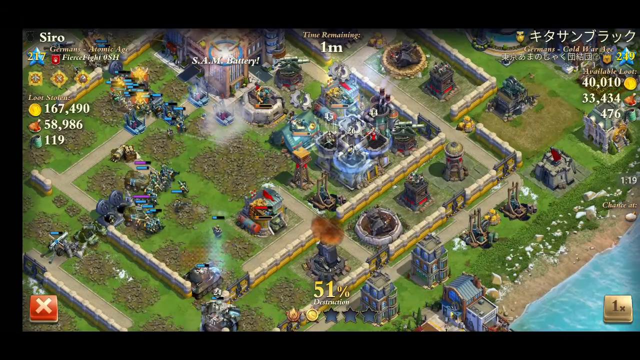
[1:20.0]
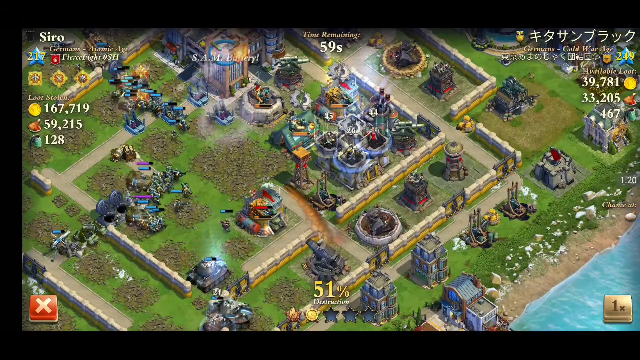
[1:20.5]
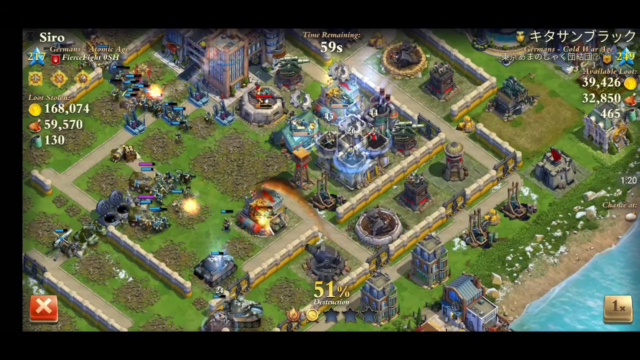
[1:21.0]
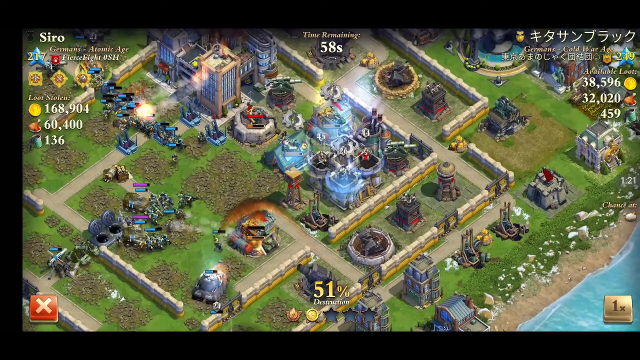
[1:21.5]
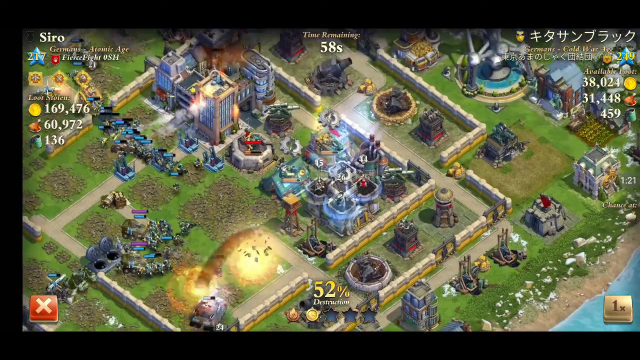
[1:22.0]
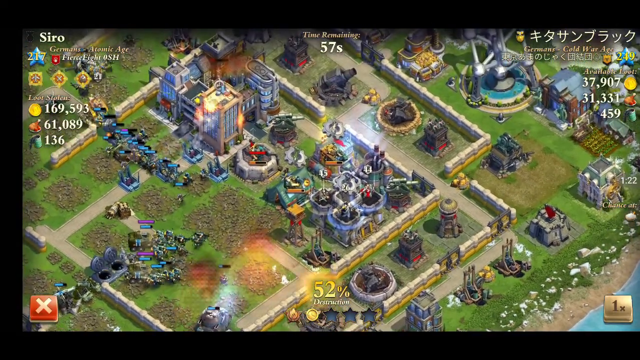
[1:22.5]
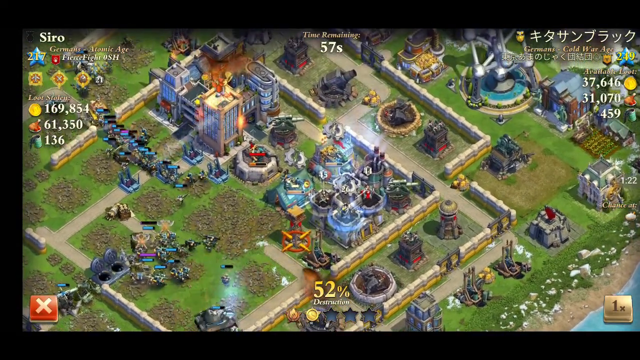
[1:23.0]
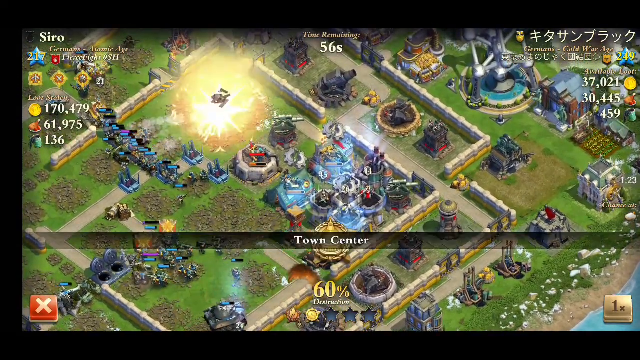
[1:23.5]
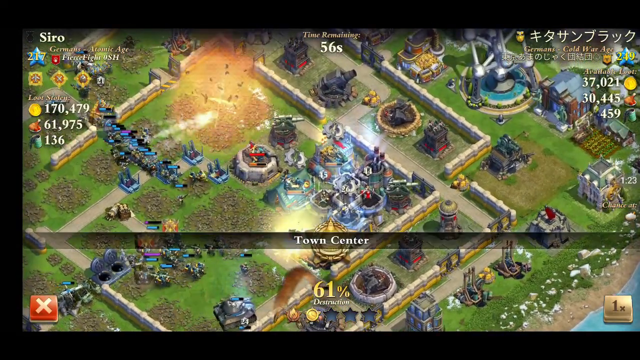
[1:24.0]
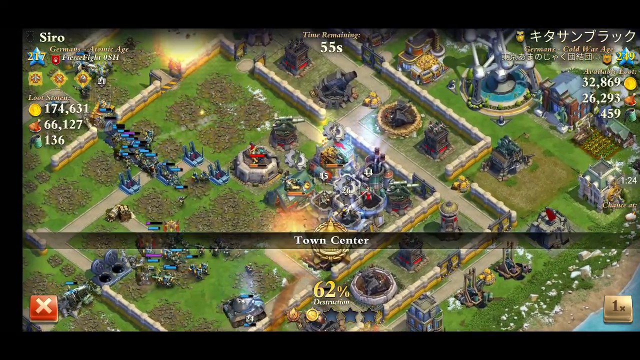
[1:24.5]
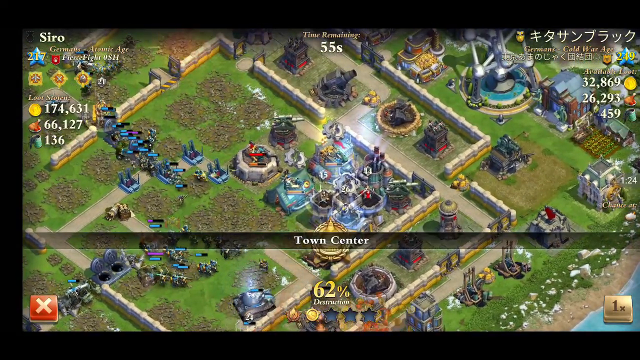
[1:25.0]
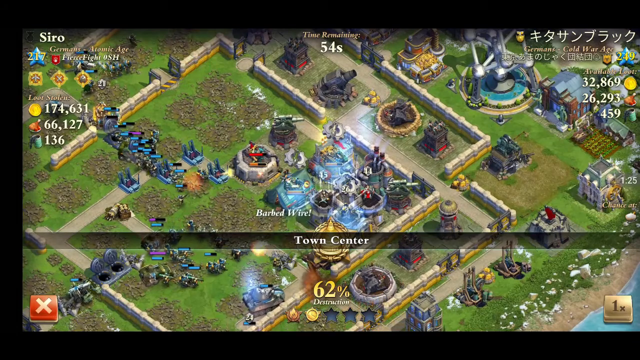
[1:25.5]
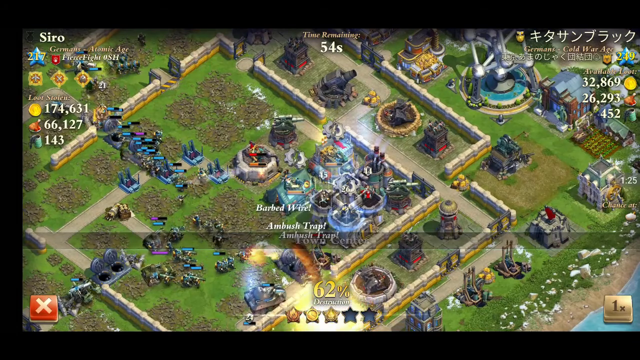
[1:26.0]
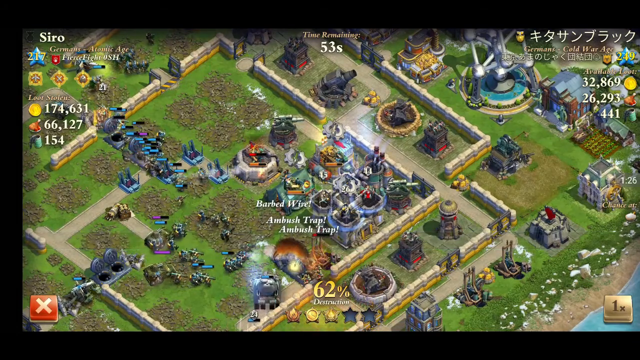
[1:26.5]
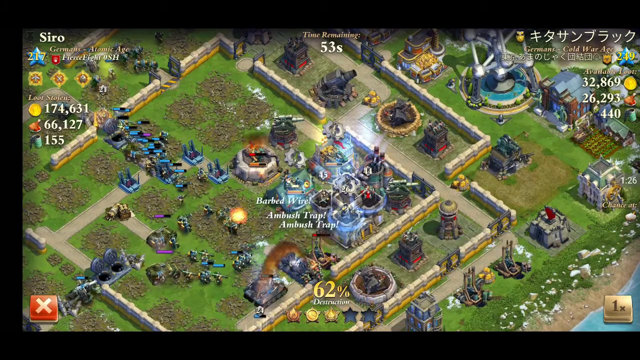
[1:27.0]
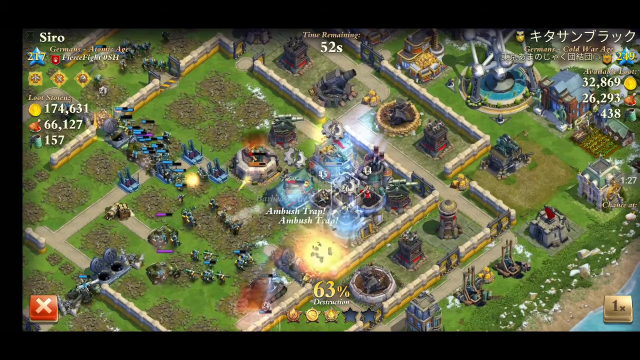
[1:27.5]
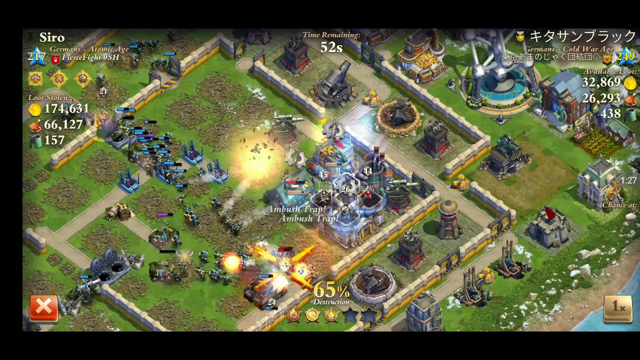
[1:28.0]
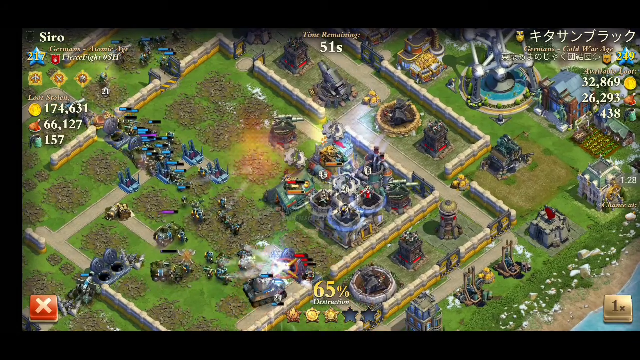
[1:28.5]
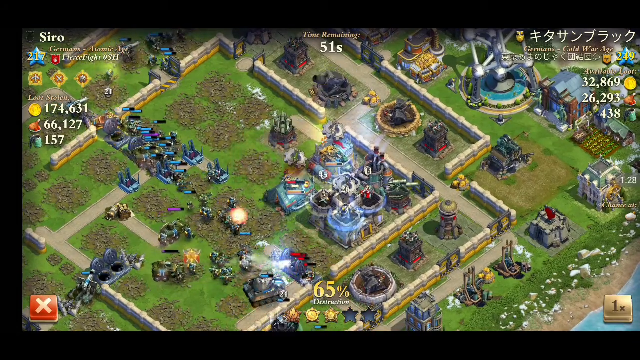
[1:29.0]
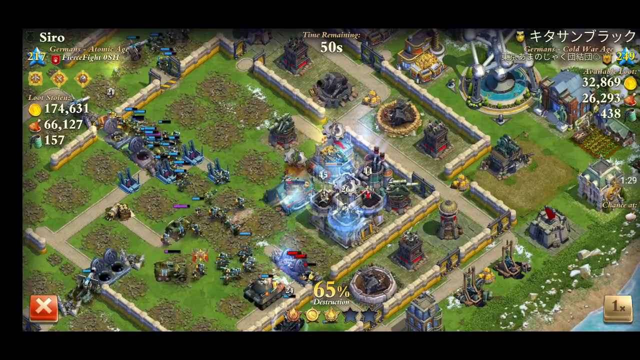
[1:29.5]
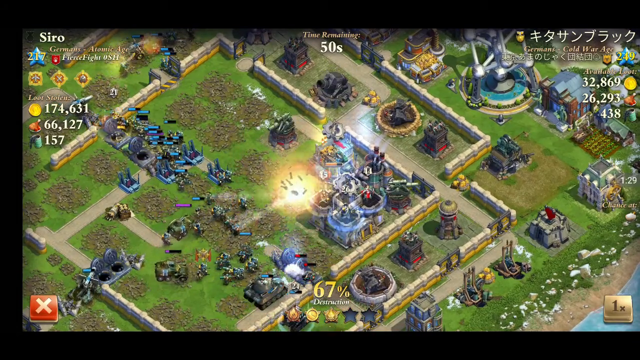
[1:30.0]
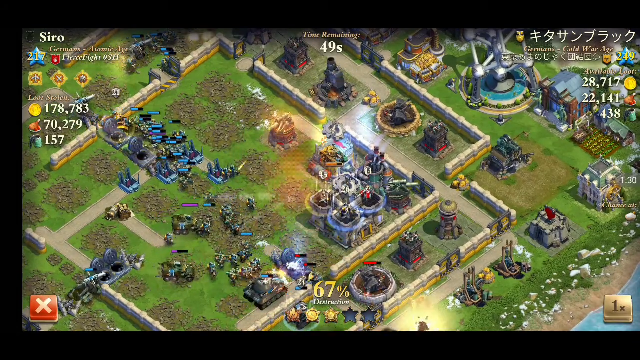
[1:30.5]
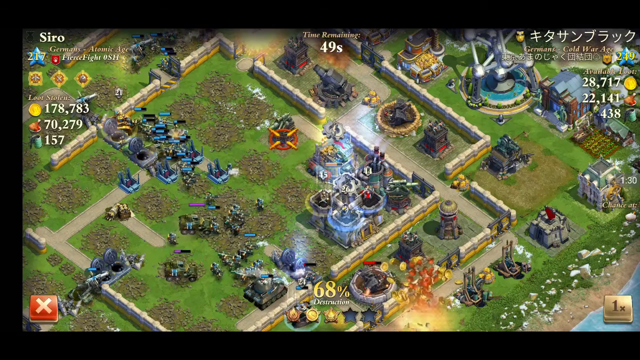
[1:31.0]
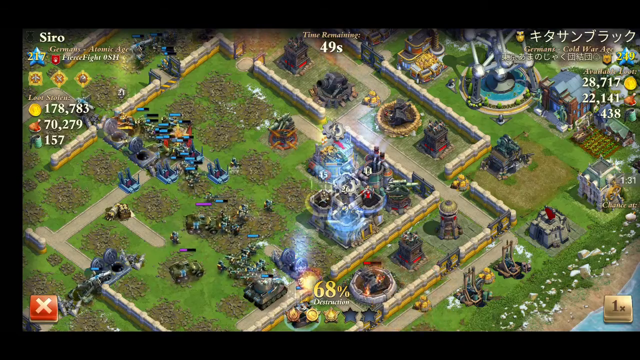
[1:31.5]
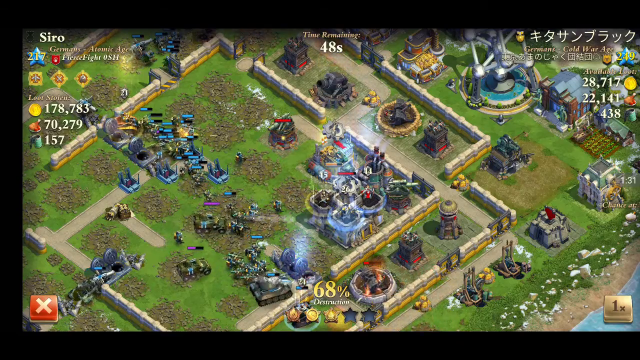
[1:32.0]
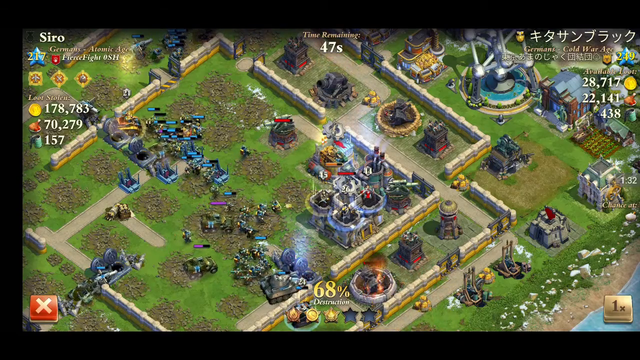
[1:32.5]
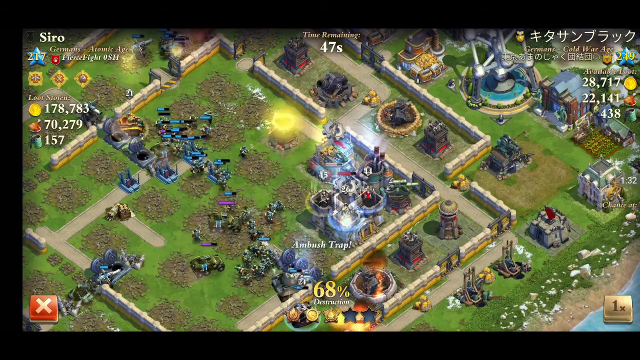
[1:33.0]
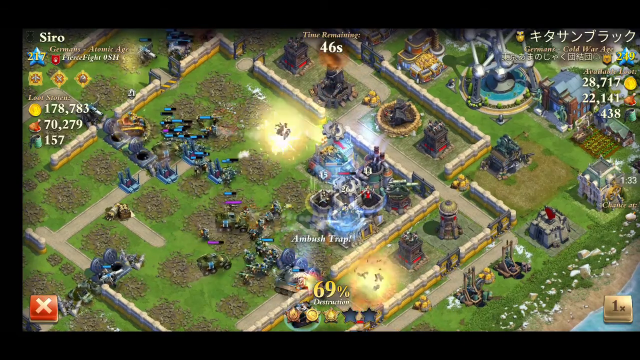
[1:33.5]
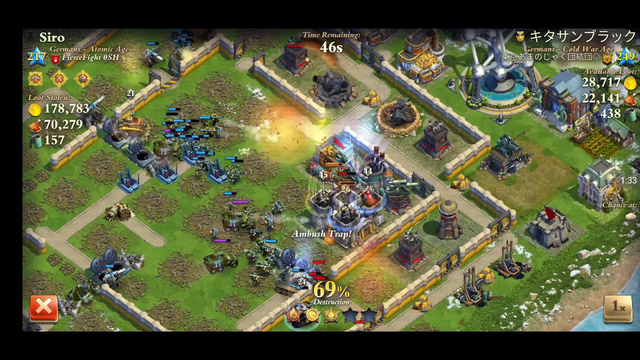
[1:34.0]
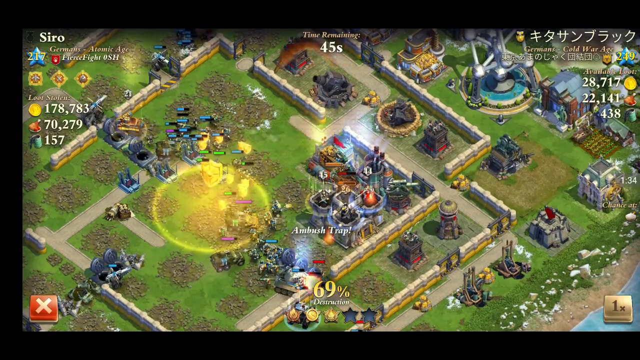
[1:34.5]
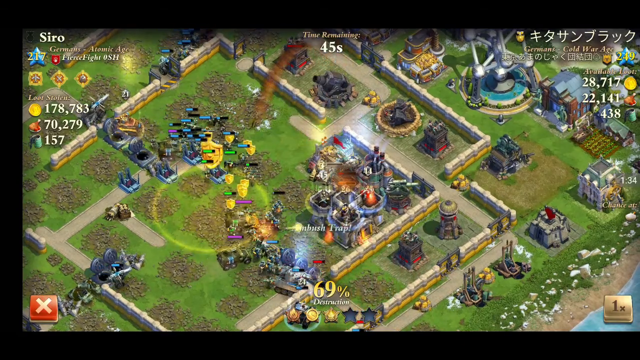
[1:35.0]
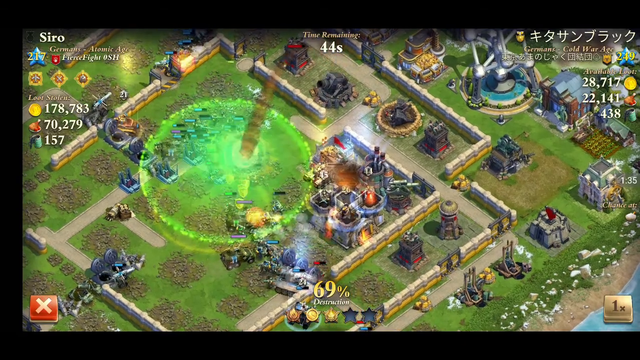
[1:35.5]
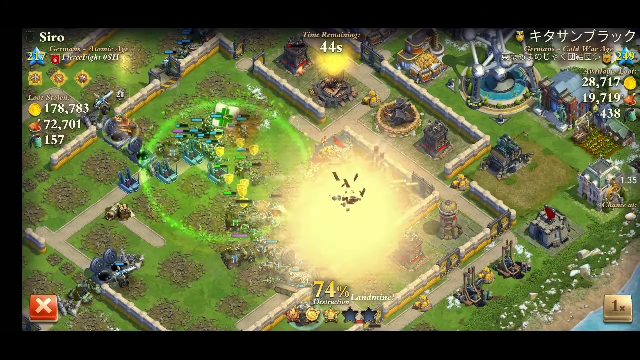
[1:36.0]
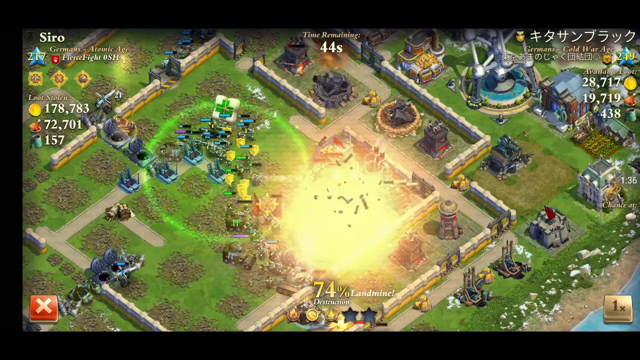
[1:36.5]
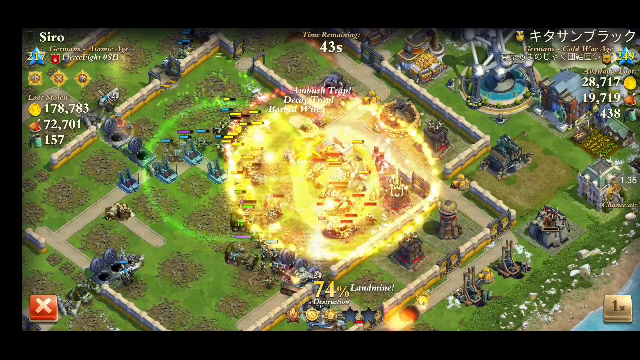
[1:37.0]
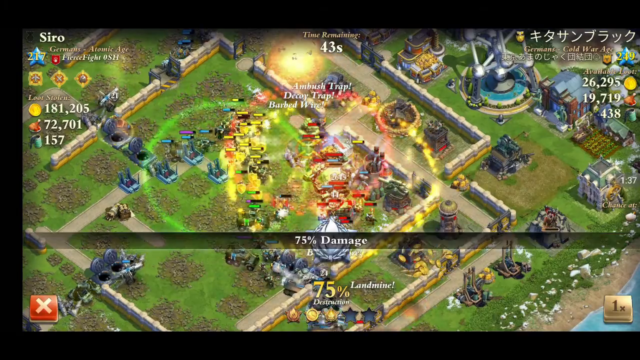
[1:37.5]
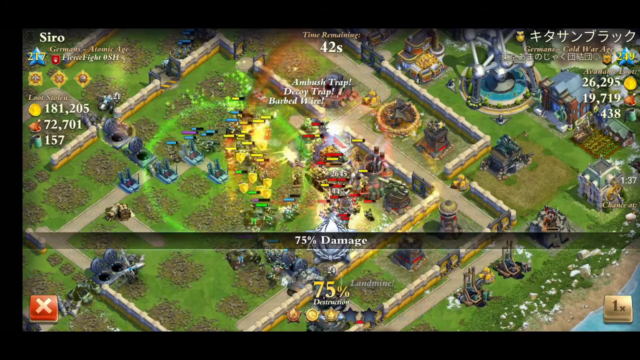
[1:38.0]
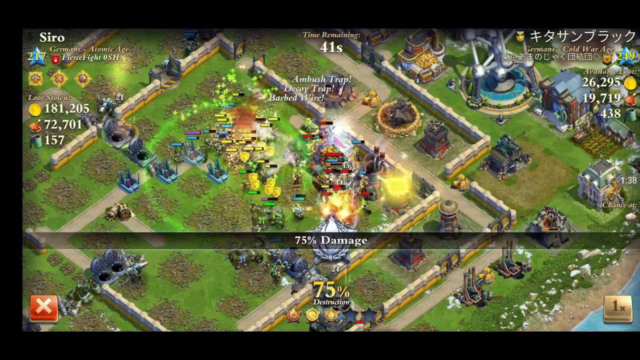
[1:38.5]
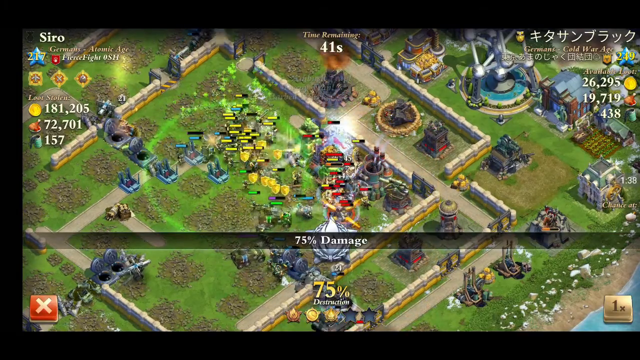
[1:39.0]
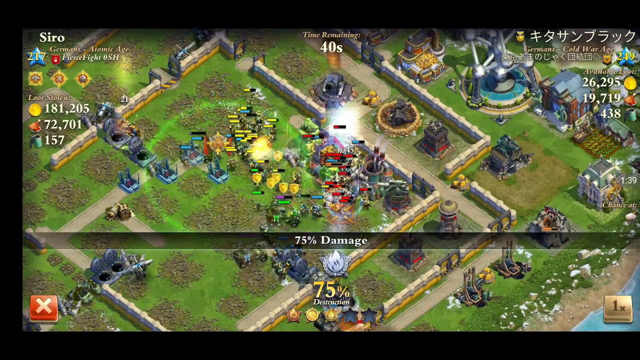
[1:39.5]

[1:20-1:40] The battle continues one way, with the attacking player apparently capturing nearly every bit of land. The destruction rises from 50% to 75%. Some ambush traps wait for the attacker, but the attacking tanks and infantry seem to deal with them almost straight away. Even bigger buildings like the town center go down quickly. The attacker does not seem to have lost many troops, and units that take damage seem to get healed. The defending forces pooled up in buildings seem to be cut down quickly.